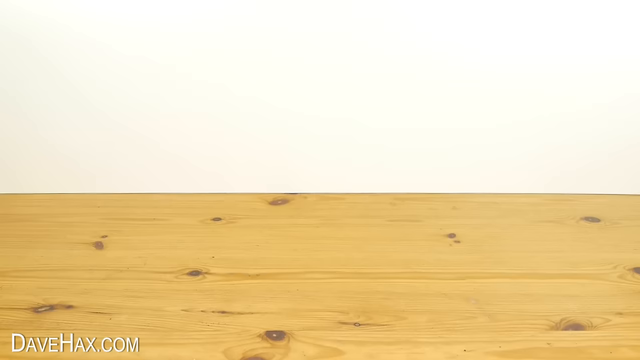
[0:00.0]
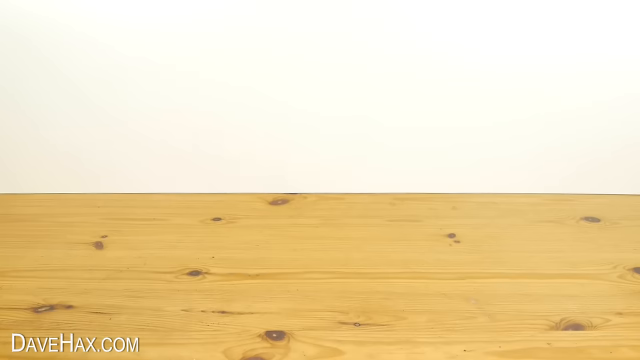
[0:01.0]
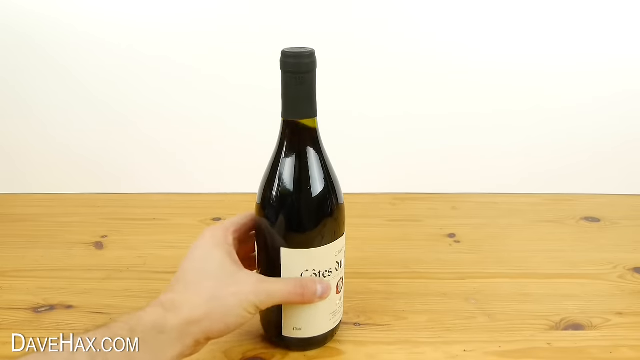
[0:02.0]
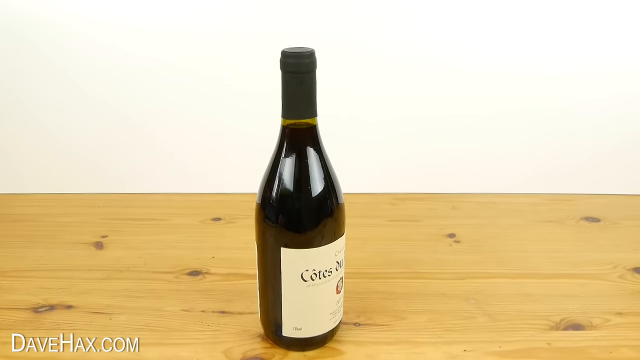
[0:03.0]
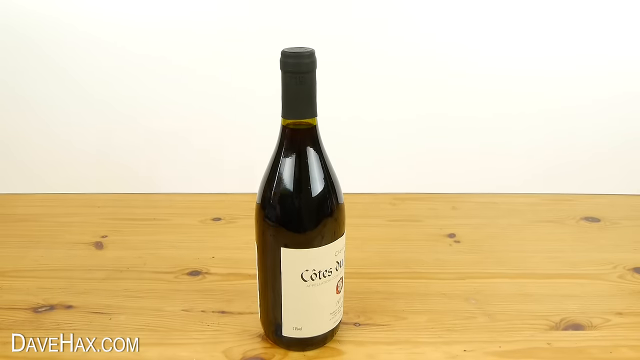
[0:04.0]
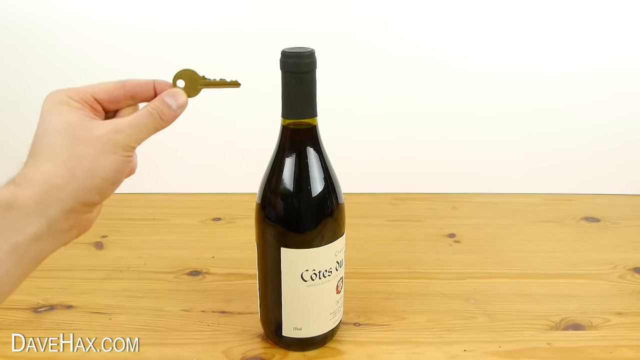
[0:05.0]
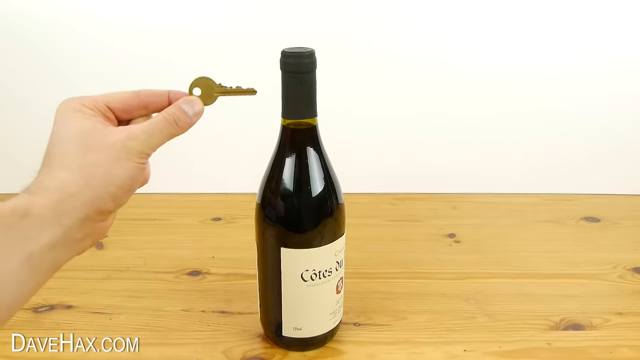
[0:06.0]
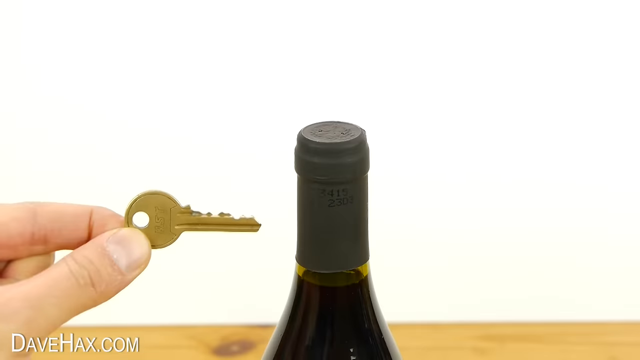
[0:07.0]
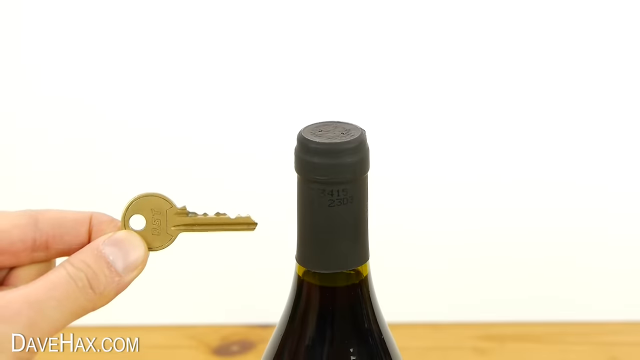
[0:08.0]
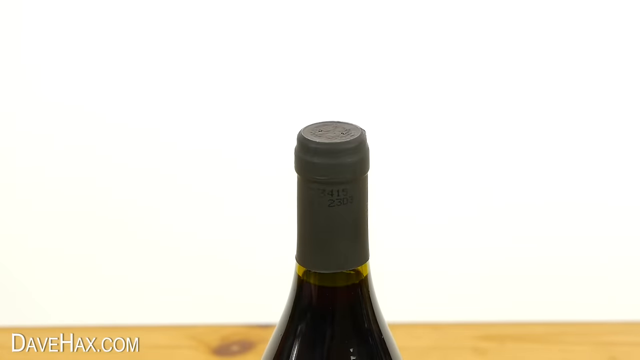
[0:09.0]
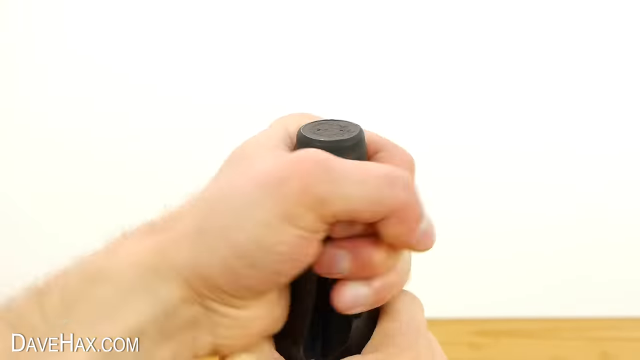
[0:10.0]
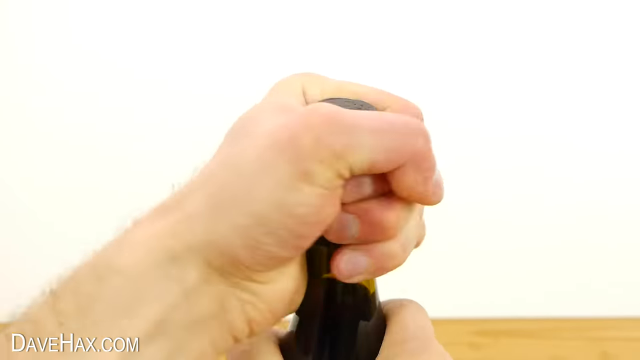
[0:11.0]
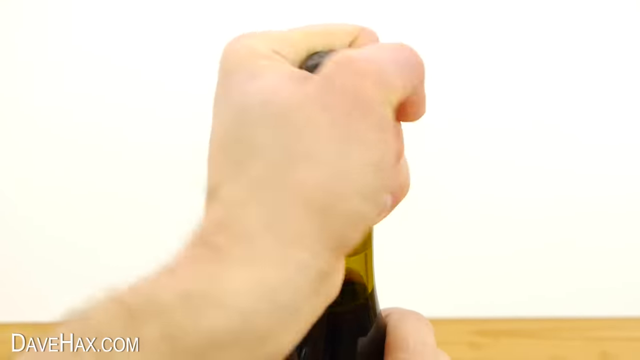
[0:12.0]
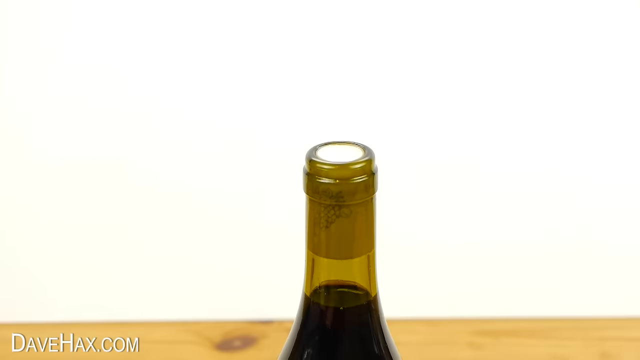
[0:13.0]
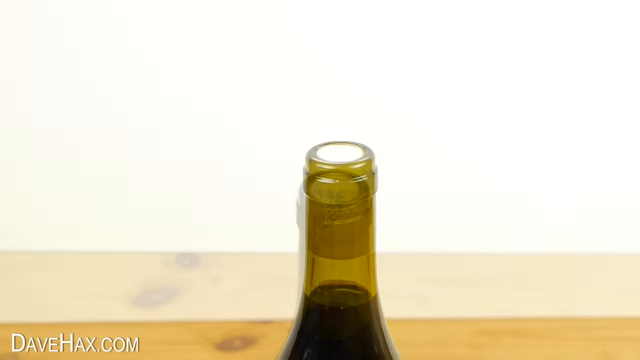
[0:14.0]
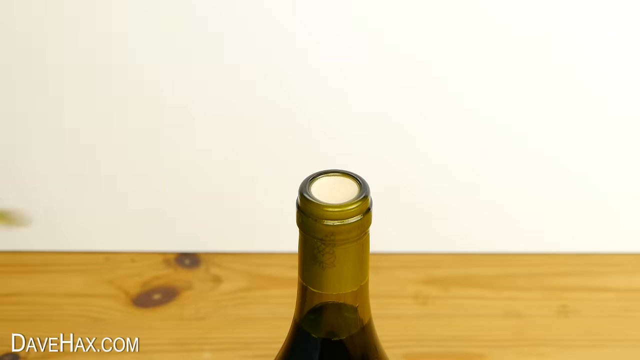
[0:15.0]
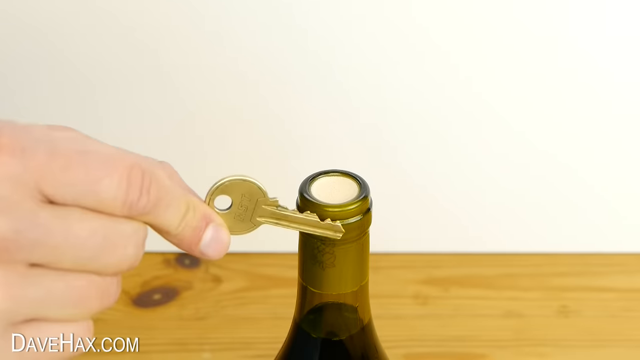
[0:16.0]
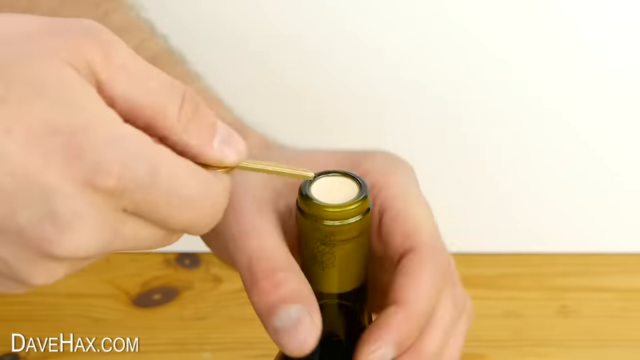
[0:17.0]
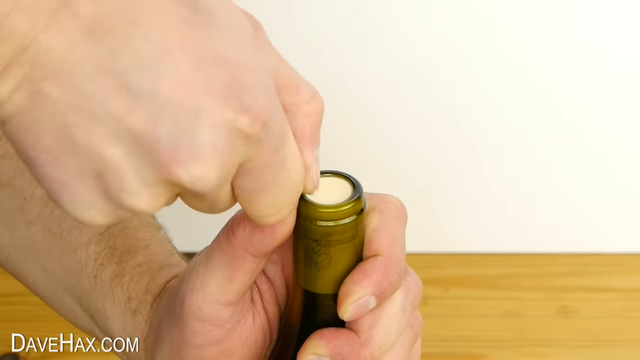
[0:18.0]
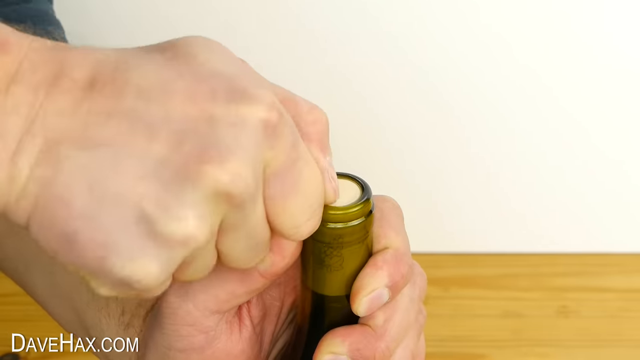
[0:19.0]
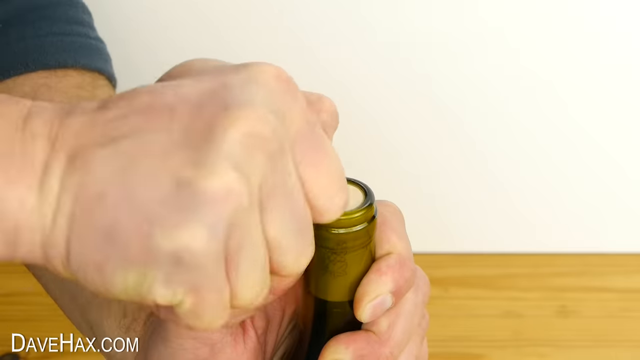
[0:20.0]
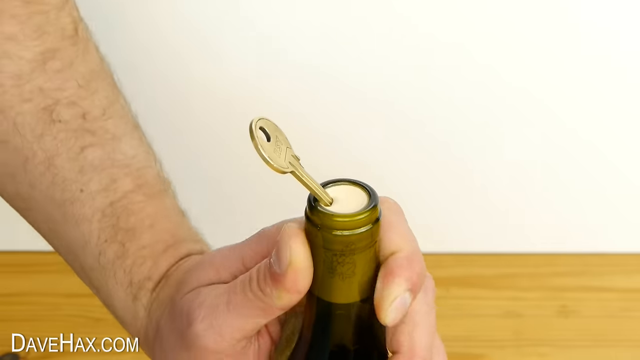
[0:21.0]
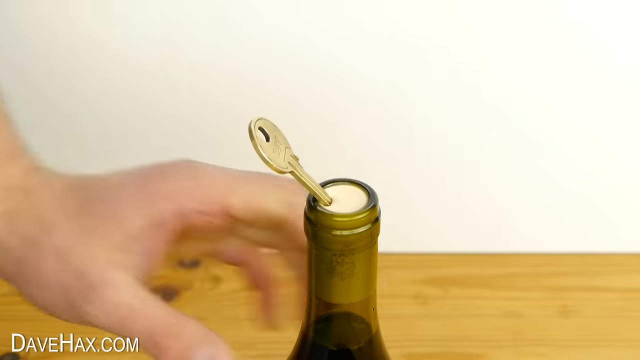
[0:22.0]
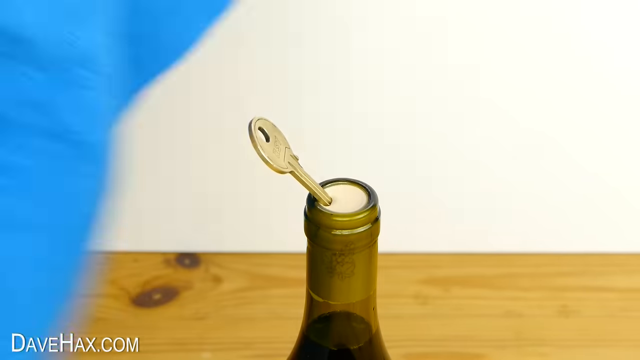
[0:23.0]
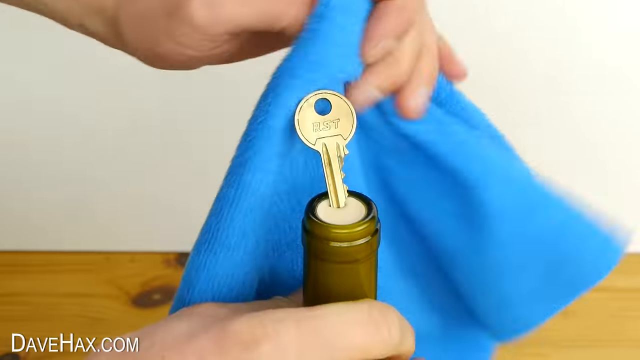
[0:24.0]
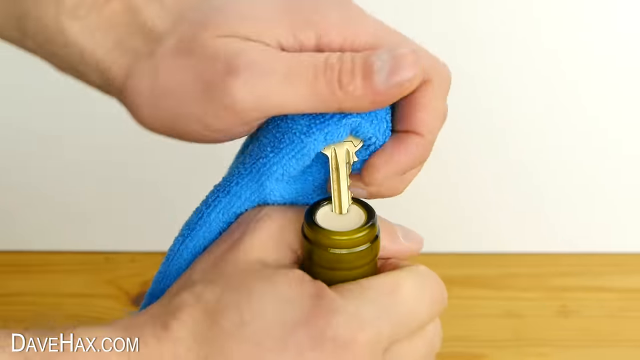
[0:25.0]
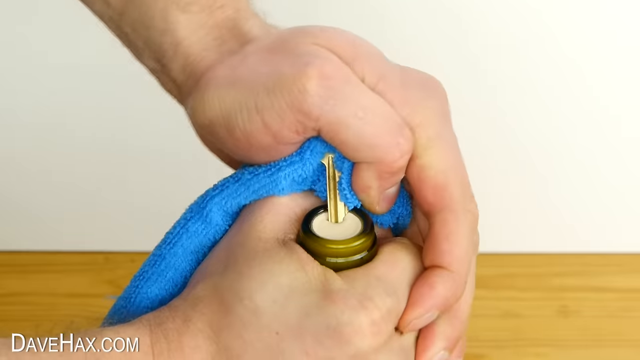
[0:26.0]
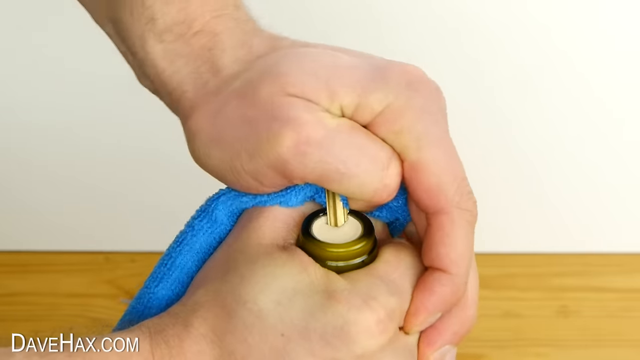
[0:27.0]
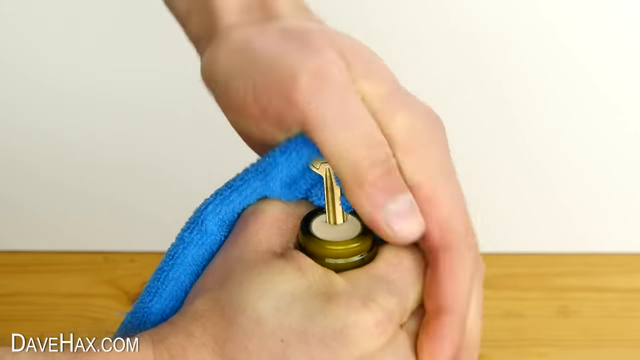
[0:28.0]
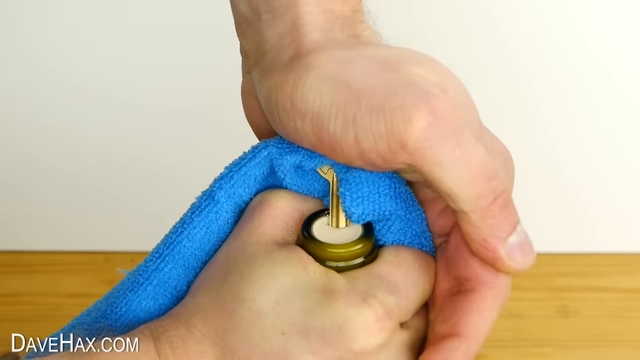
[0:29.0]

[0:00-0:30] A bottle of wine appears to have just been placed on a knotted wood counter. A man's hands show a key and hold it next to the bottle. He screws off the black top, shows the key again, and pushes it into the cork at an angle. The text "davehacks.com" appears on the side. The key is a brass key that looks small, like one that might be used for a mailbox. After starting the key into the cork at an angle, he takes a blue washcloth-type rag and uses it to push the rest of the key in.